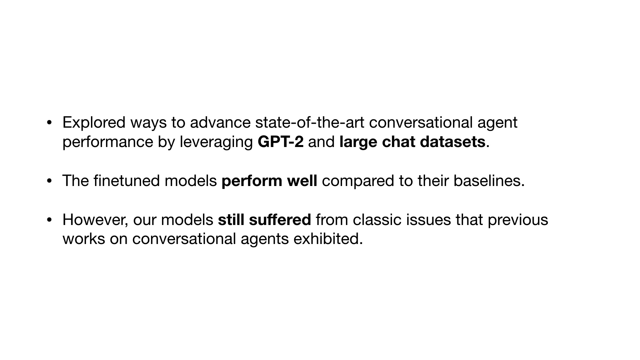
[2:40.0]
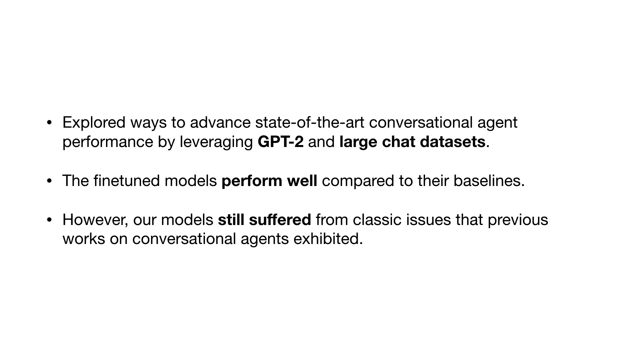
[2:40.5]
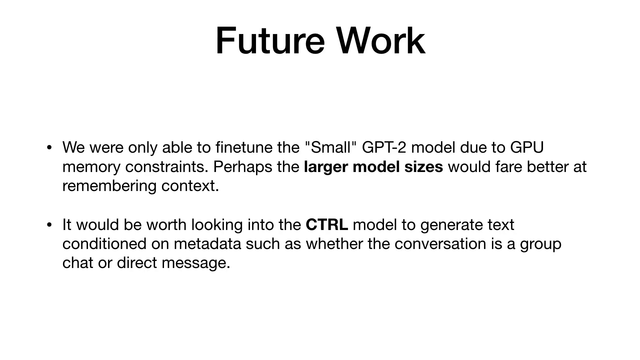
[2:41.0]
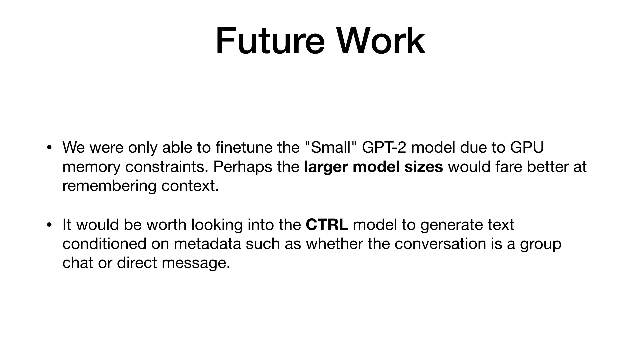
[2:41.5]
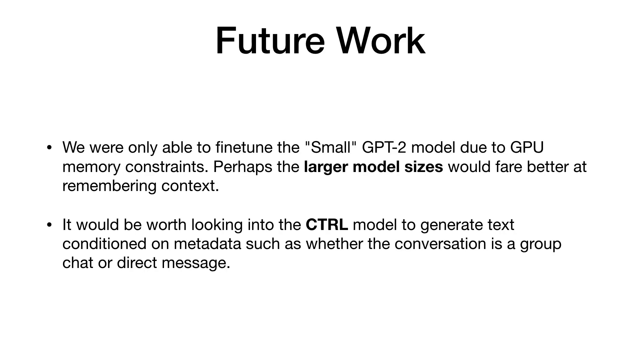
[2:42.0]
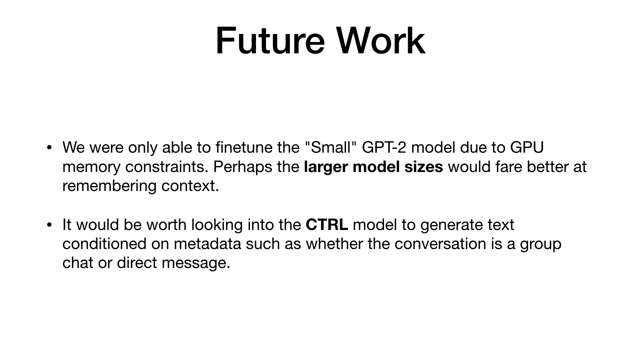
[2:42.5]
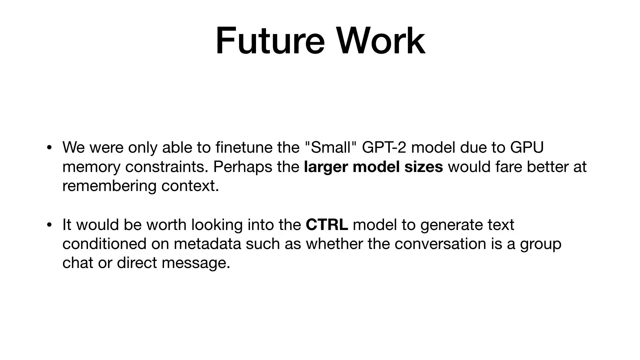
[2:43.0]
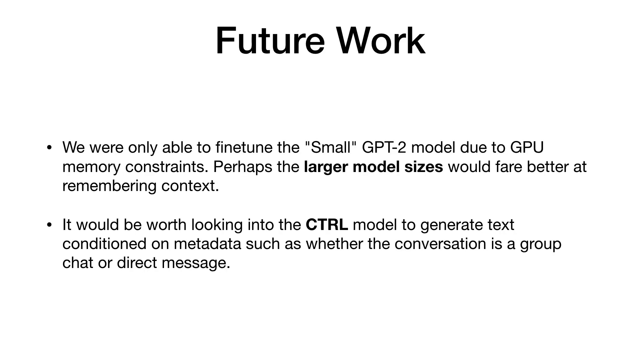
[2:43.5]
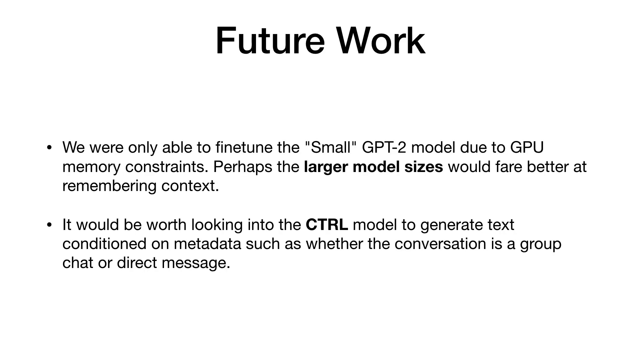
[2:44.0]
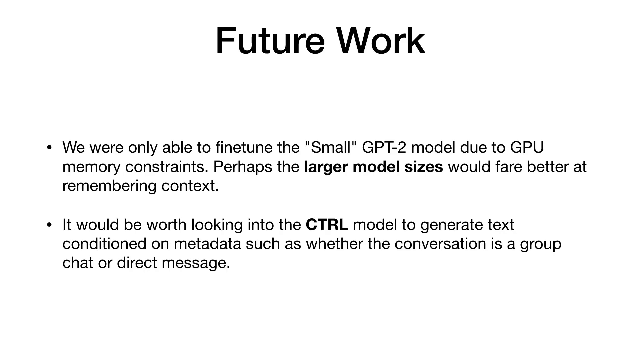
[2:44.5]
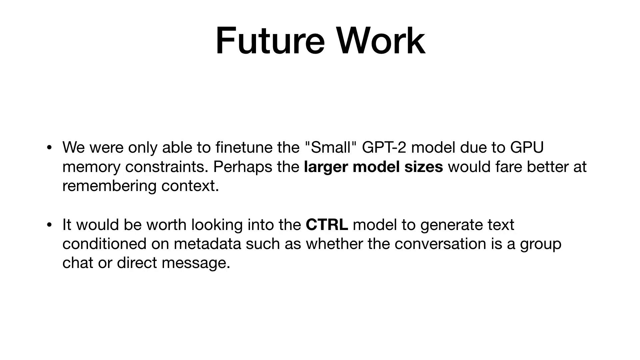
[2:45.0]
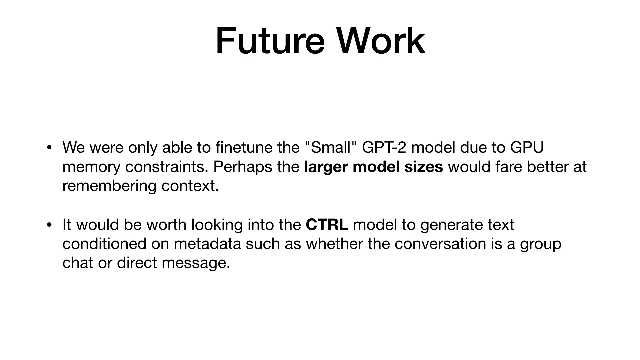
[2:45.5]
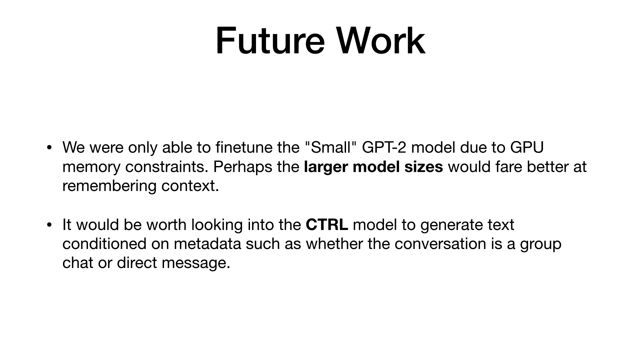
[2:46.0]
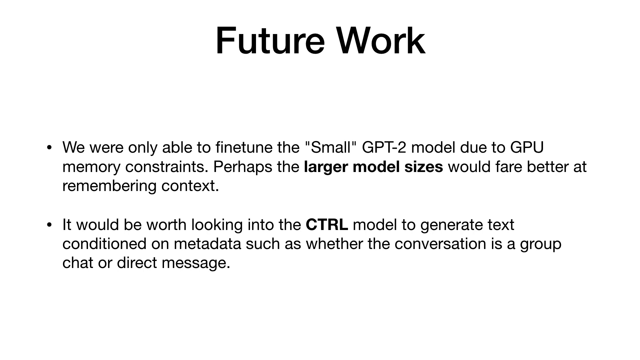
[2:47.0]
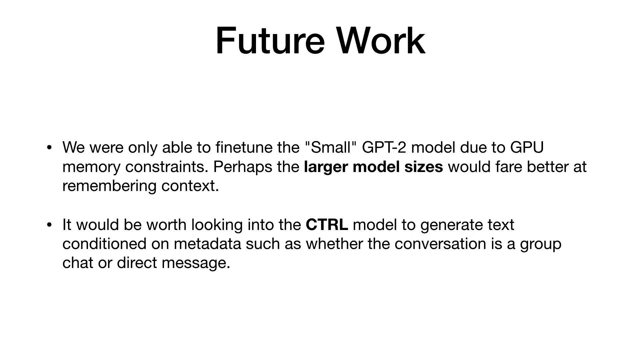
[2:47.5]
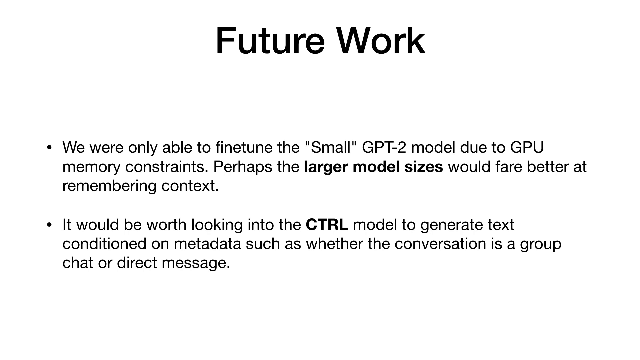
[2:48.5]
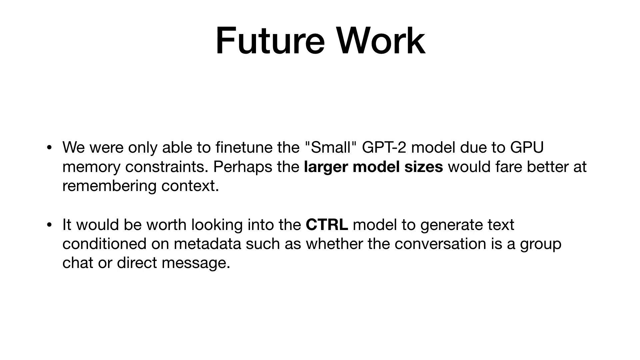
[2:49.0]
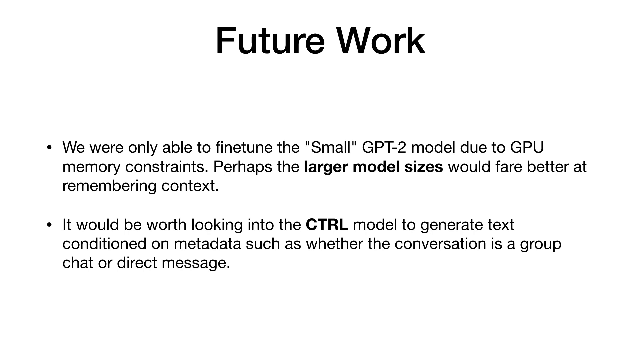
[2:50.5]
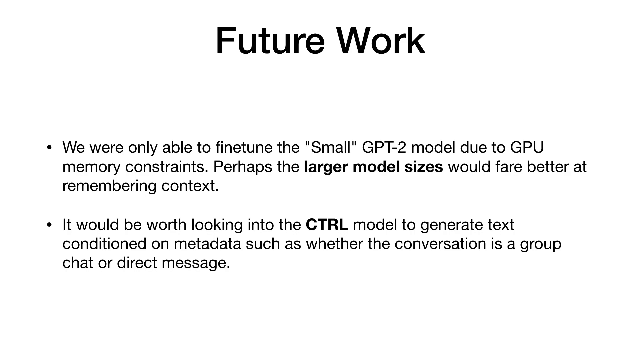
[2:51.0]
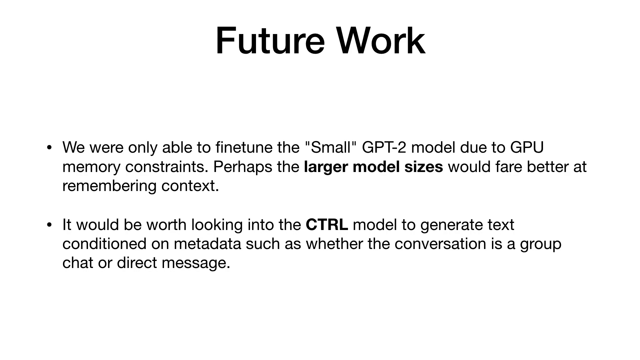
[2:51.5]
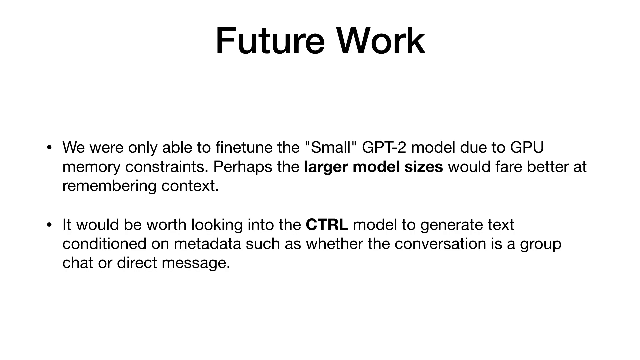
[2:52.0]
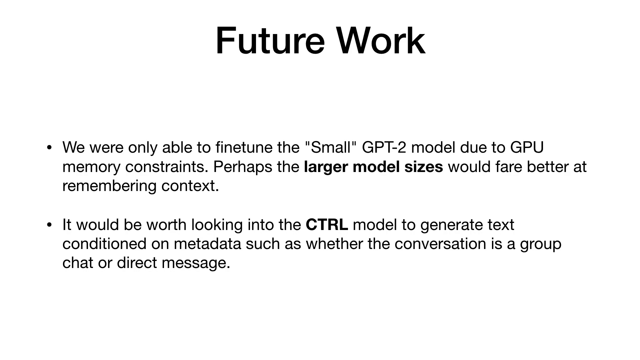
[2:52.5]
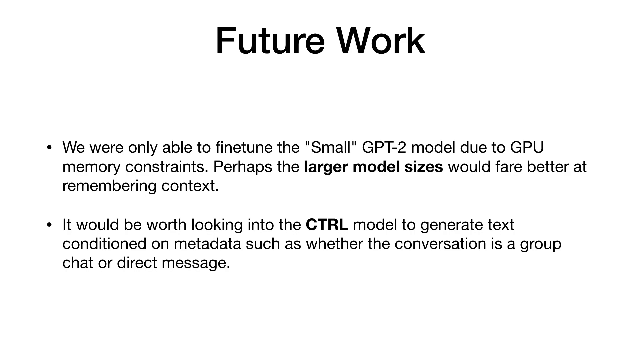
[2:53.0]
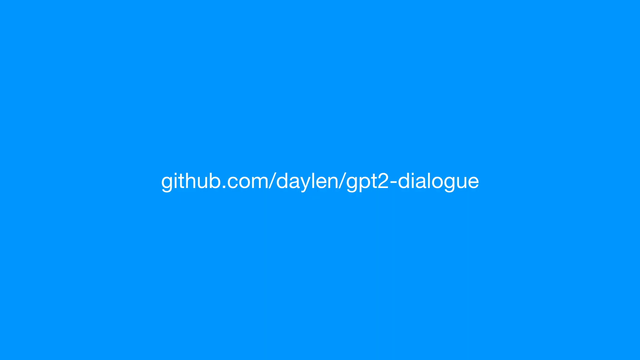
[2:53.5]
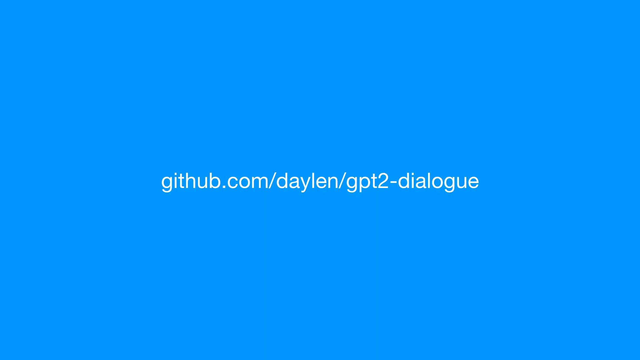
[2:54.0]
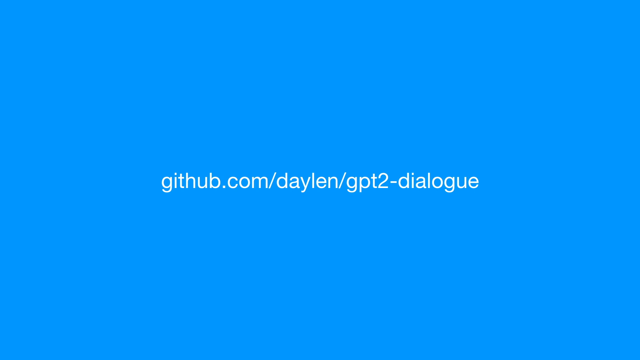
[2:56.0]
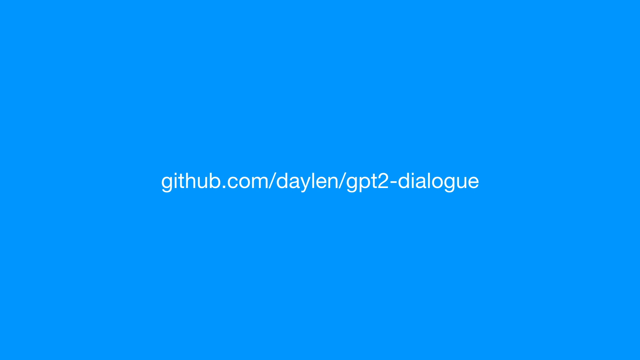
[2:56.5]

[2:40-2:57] The recap slide is still on screen, then the video slides over to a white slide with black text titled "future work," which reads "We're only able to fine-tune the small GPT-2 model due to GPU memory constraints. Perhaps the larger model sizes would fare better at remembering context. It would be worth looking into the CTRL model." The slide stays up for quite a while. The video then cuts to the last slide, a blue slide with a github.com URL ending in "/GPT-2-dialog," which appears to be the end of the slideshow.